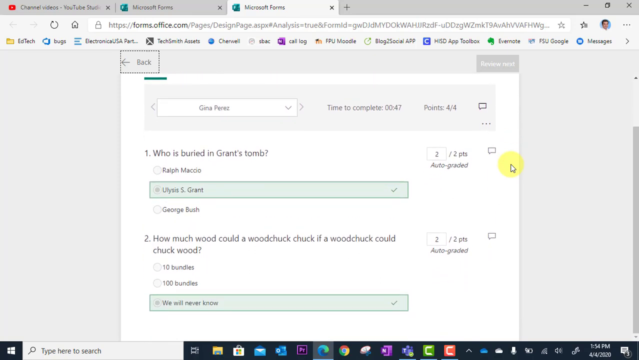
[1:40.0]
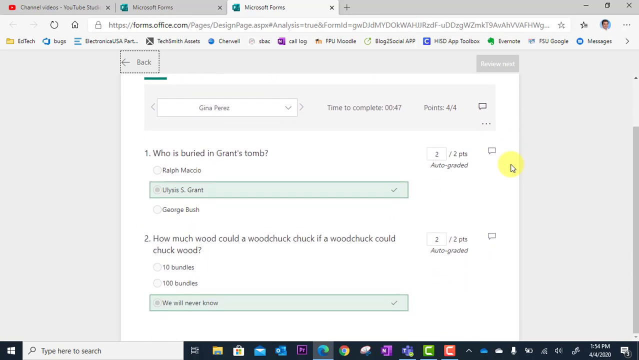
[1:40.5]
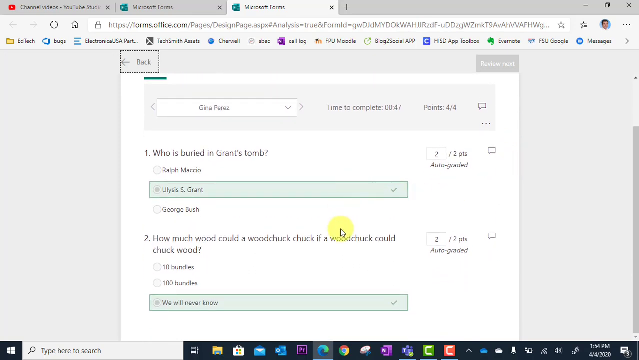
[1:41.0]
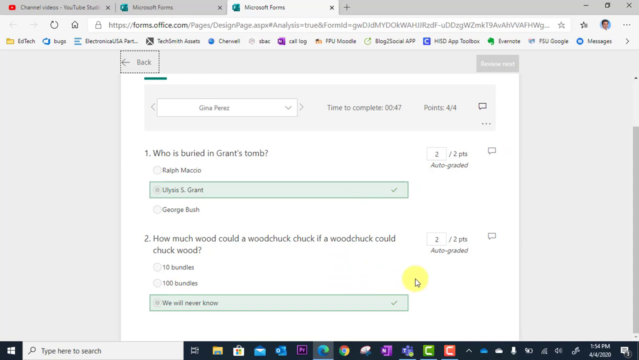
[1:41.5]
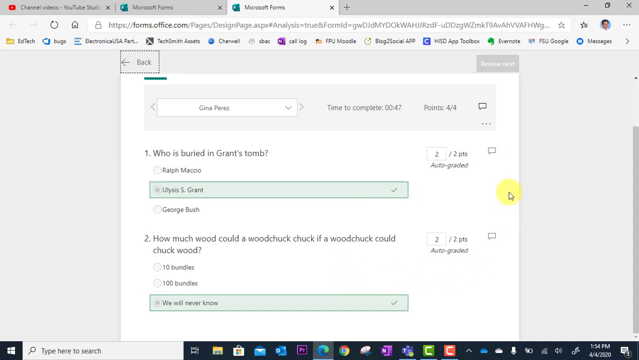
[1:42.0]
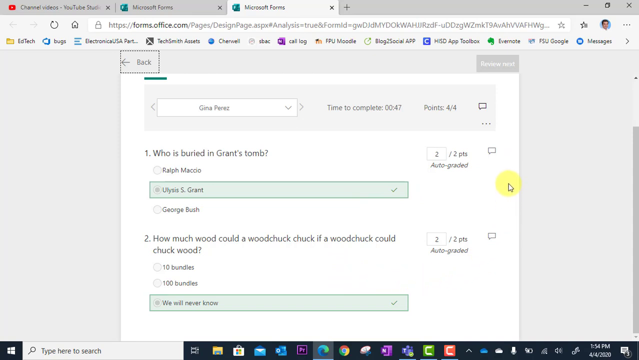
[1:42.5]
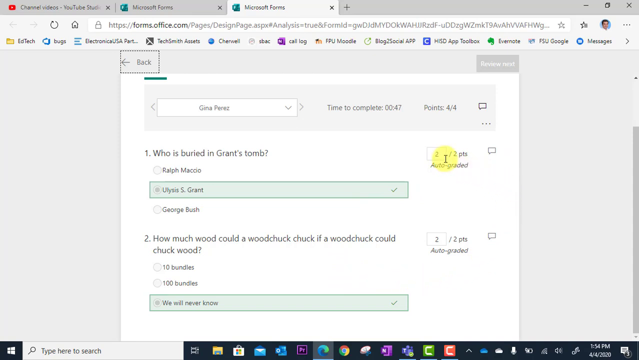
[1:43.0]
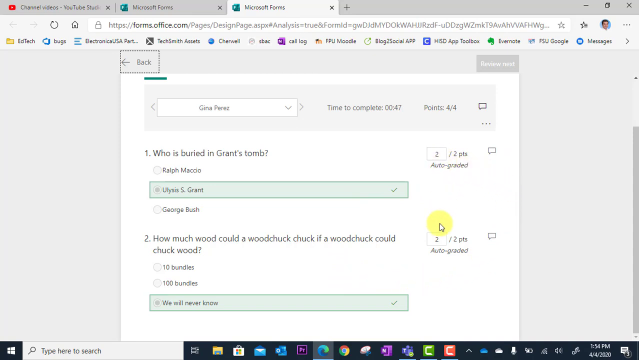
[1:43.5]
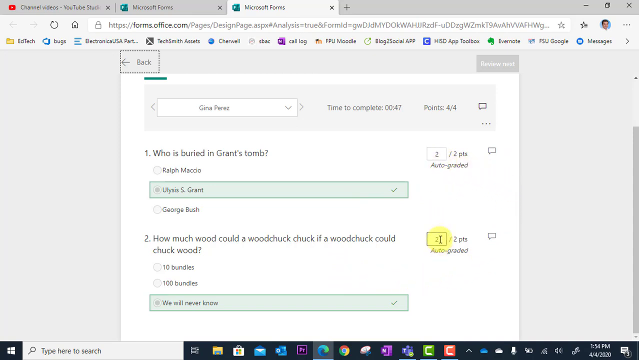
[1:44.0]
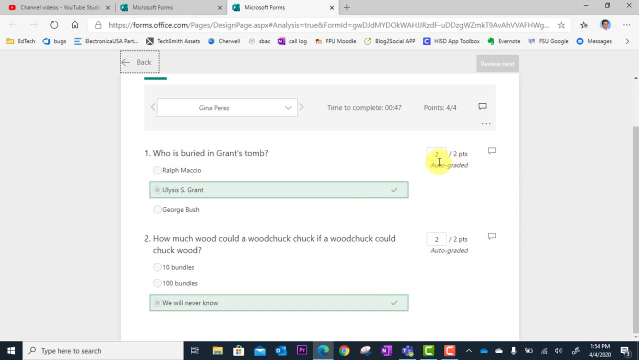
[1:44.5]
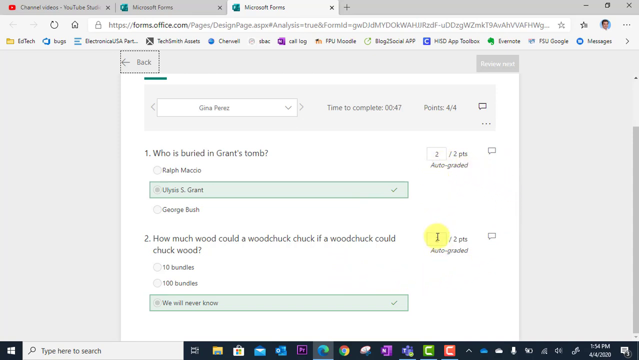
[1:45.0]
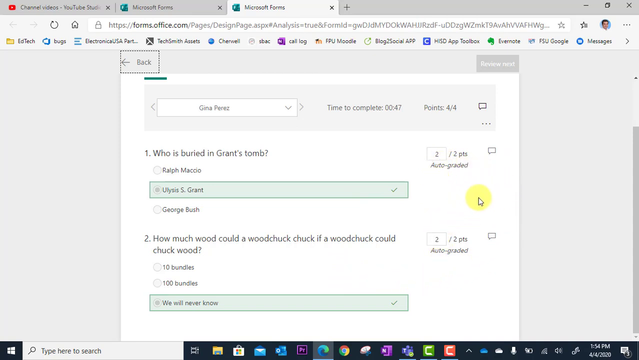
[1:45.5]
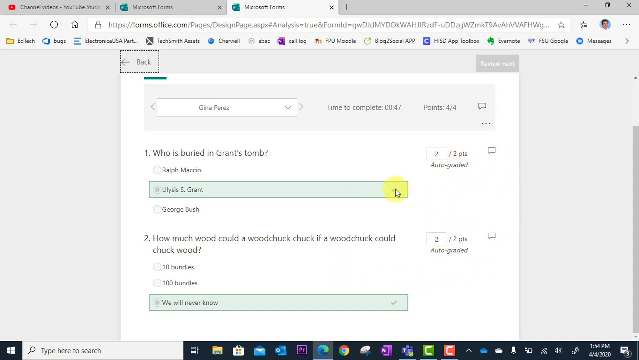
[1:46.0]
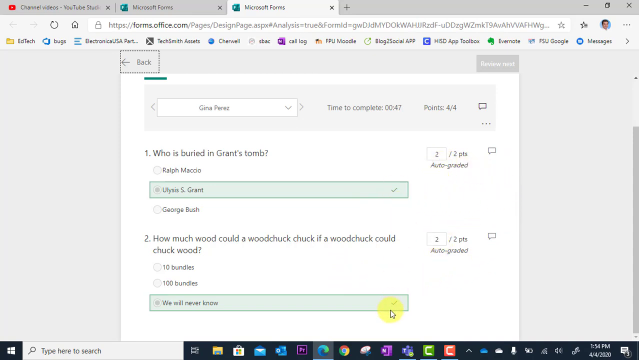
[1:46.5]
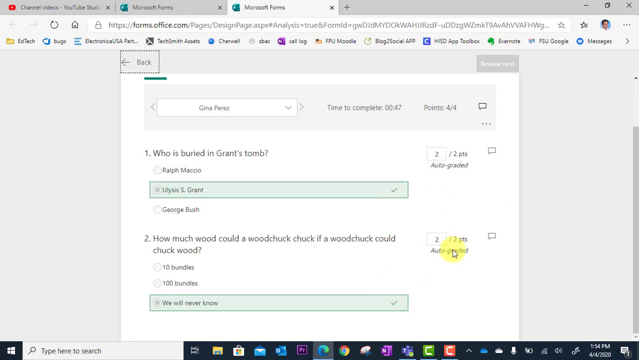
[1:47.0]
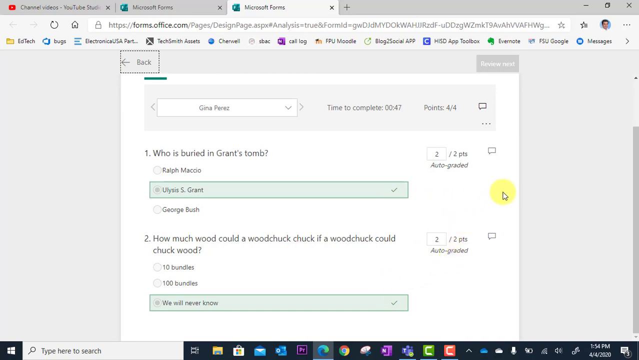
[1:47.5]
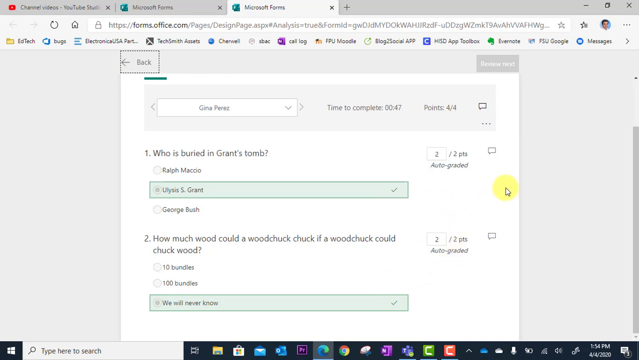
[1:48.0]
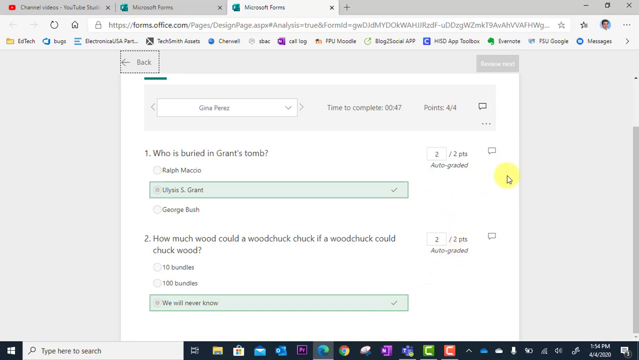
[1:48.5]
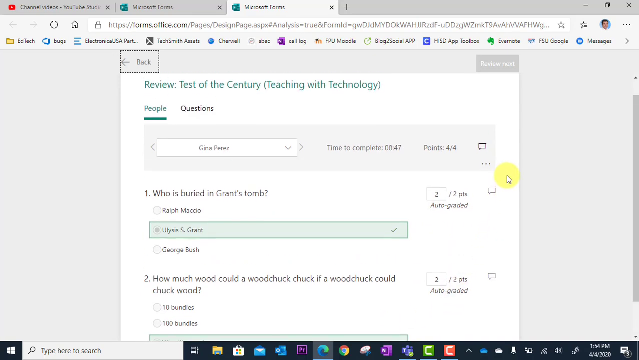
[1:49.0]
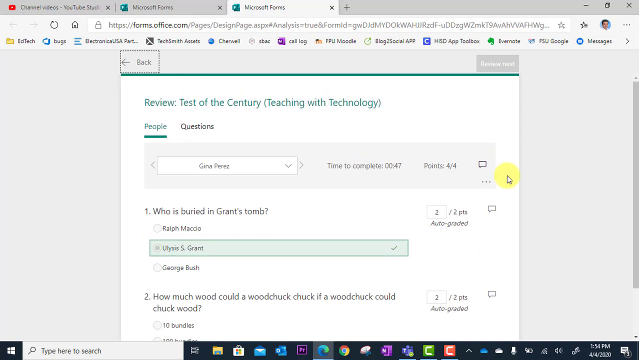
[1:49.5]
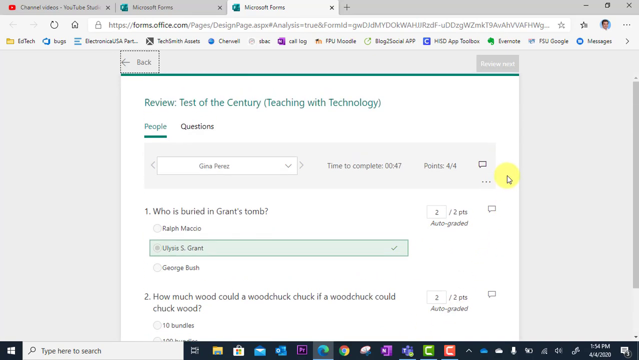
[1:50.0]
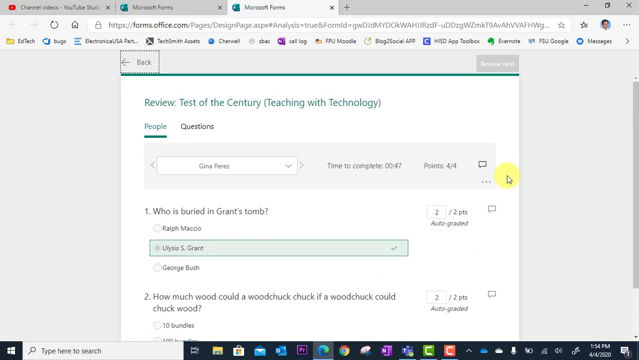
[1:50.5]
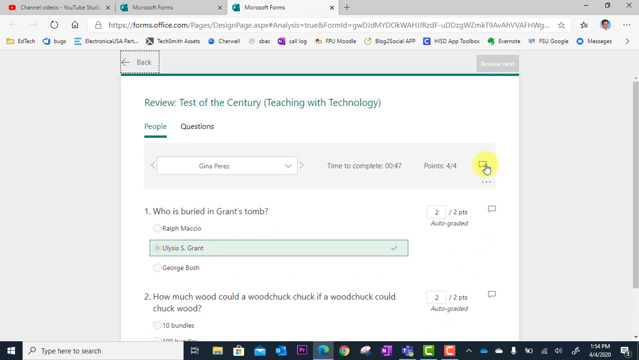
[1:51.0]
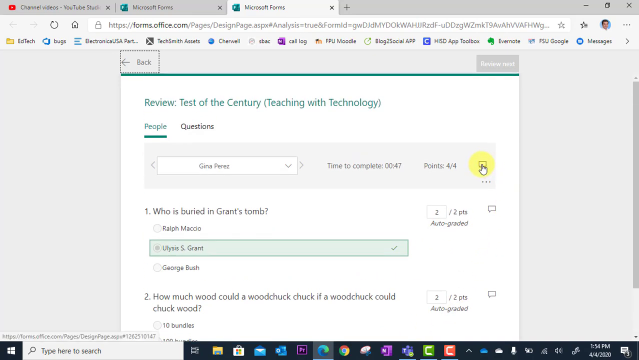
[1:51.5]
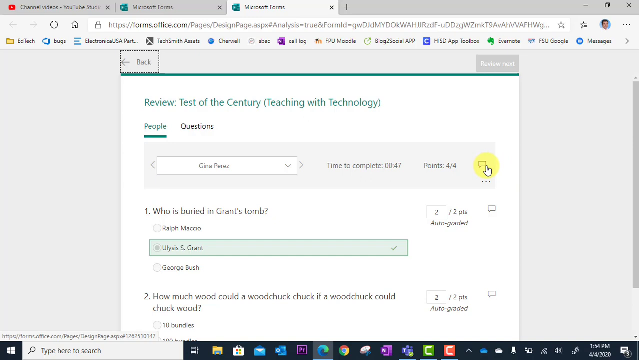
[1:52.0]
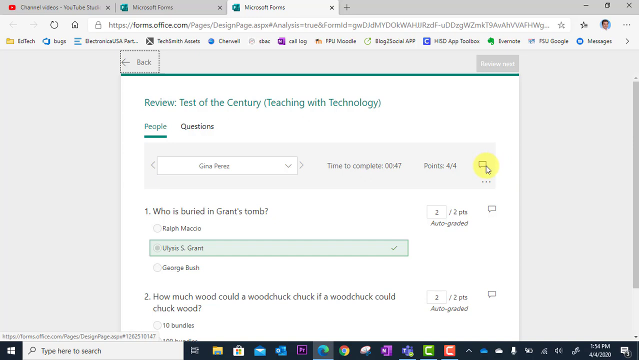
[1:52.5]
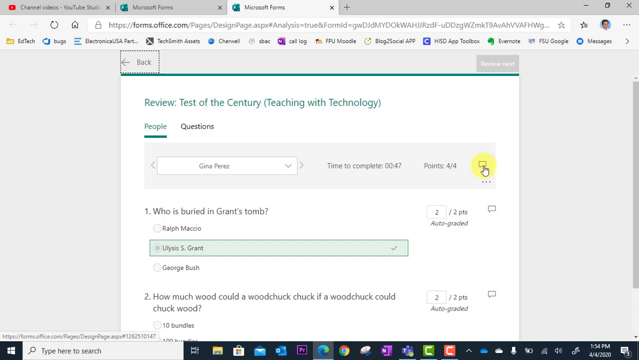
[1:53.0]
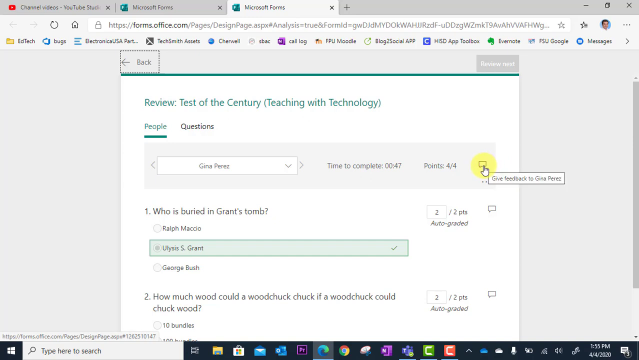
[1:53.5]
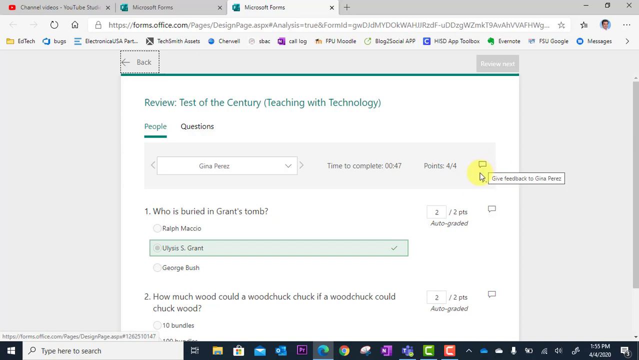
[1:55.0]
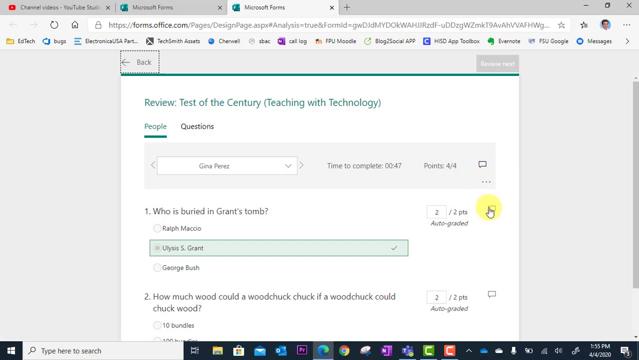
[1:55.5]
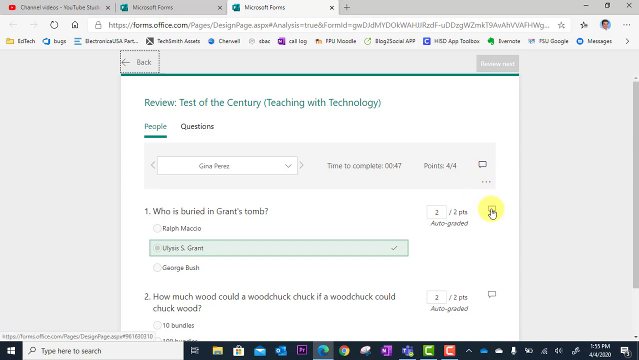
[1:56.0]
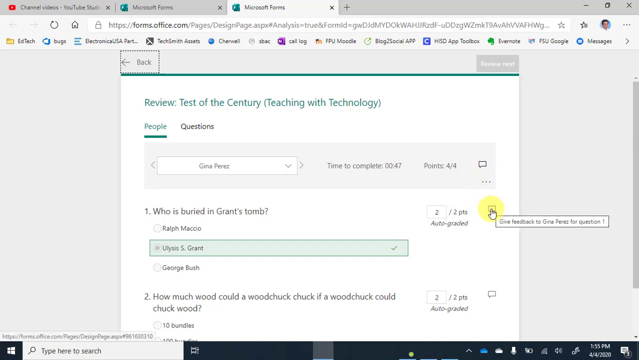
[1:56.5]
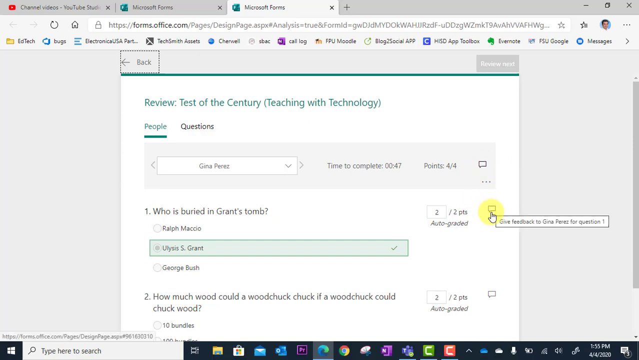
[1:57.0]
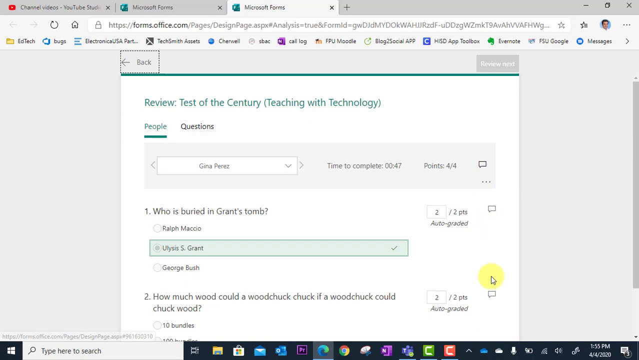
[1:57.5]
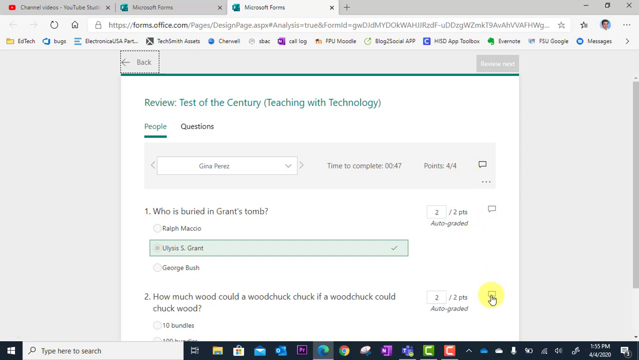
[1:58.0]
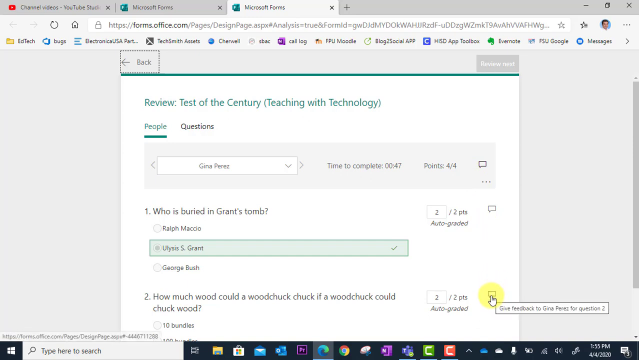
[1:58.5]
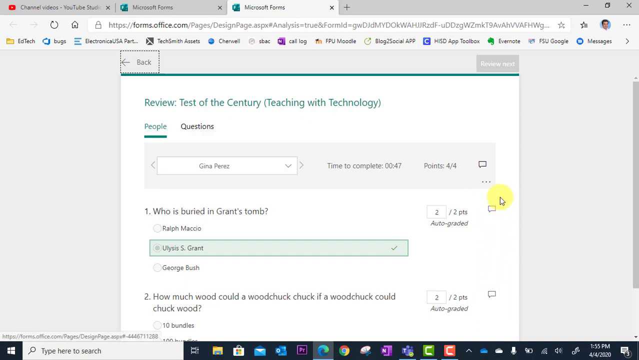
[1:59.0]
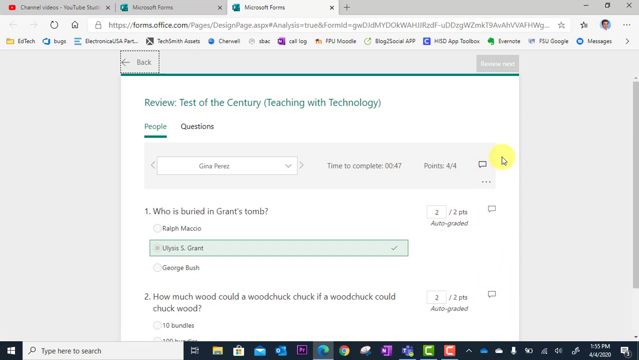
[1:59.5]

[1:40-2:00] The Microsoft Forms interface continues to show Gina Perez's completed Test of the Century quiz. At the top, her name is visible in the drop-down selector, and the summary shows she completed the quiz in 47 seconds, earning a perfect 4 out of 4 points. The score box is highlighted near the top right section. The first question, who is buried in Grant's tomb, lists three possible answers: Ralph Macchio, Ulysses S. Grant, and George Bush. The correct choice, Ulysses S. Grant, is selected with a green checkmark labeled 2 out of 2 points, with "auto-graded" in small gray text to the right. The other two options remain unselected. The second question, how much wood could a woodchuck chuck if a woodchuck could chuck wood, lists three responses: 10 bundles, 100 bundles, and "we will never know." The chosen answer, "we will never know," is marked correct with a green checkmark, with 2 out of 2 points and auto-graded beside it, while the incorrect options remain unchecked above. The view remains largely static, with only minor cursor movement around the score and feedback icons. The interface has a clean white background and light gray section dividers, with the browser tab bar and bookmarks visible at the top and the Windows taskbar at the bottom of the screen.